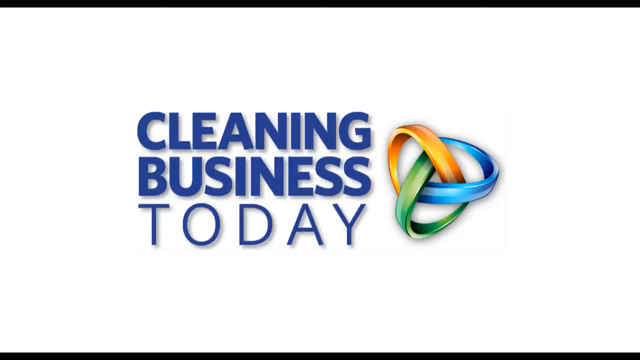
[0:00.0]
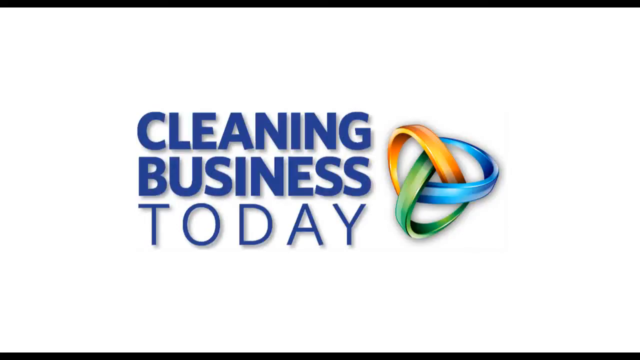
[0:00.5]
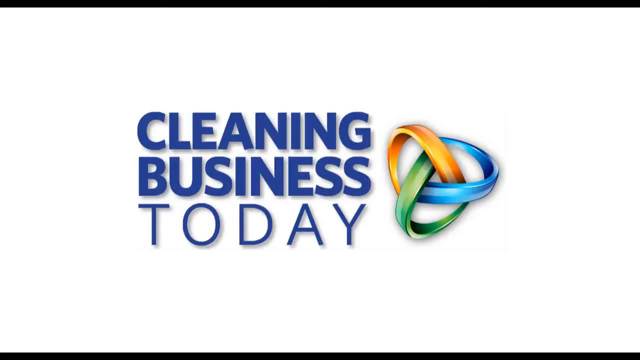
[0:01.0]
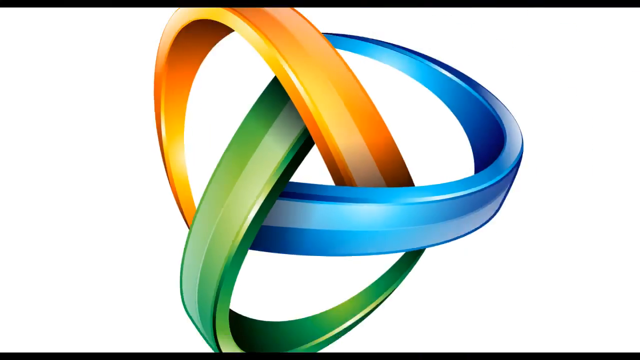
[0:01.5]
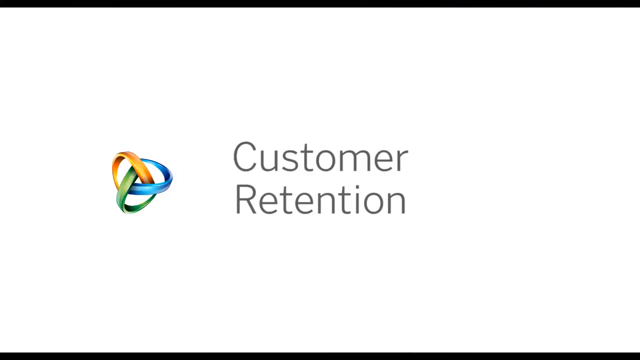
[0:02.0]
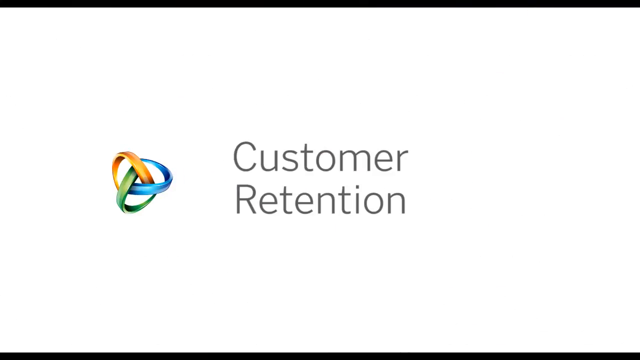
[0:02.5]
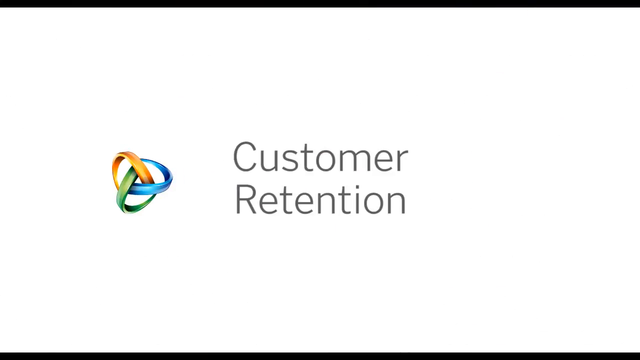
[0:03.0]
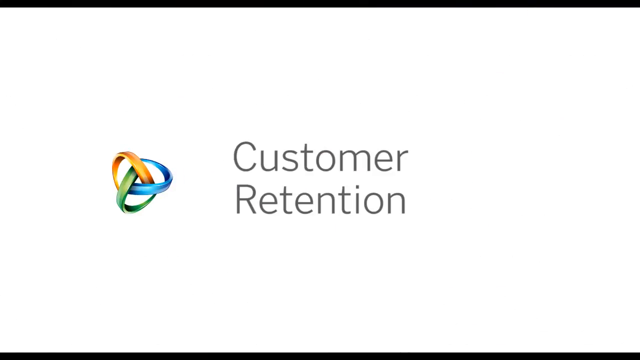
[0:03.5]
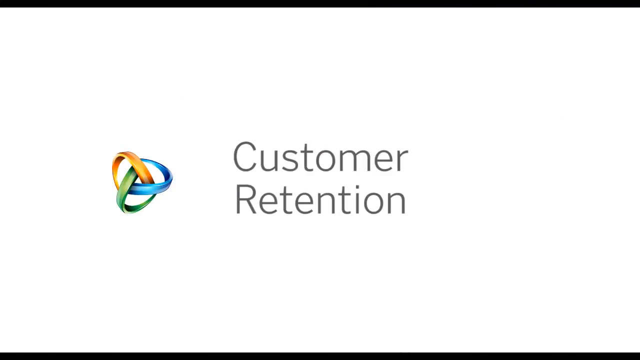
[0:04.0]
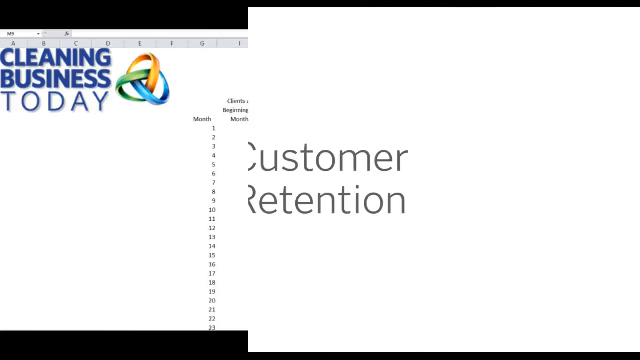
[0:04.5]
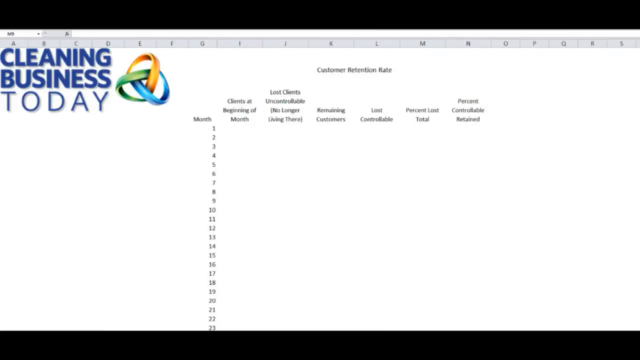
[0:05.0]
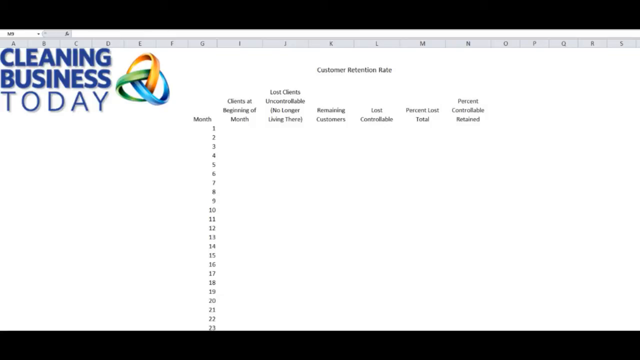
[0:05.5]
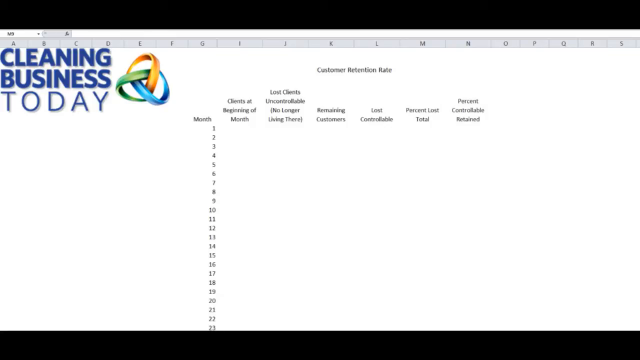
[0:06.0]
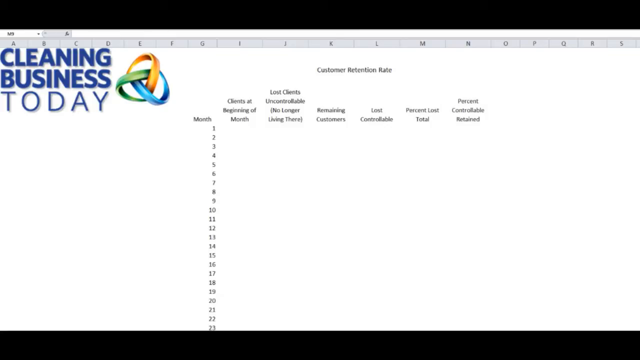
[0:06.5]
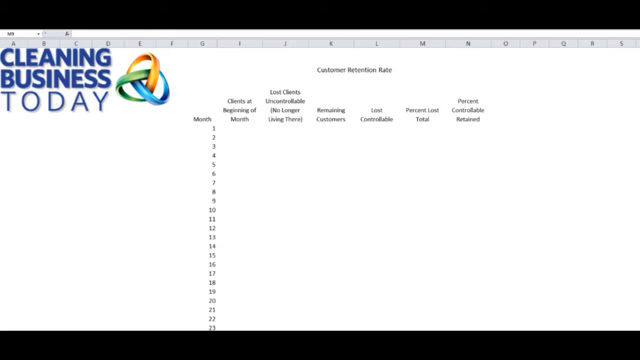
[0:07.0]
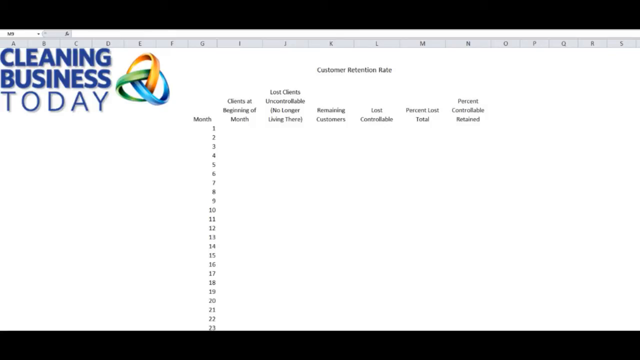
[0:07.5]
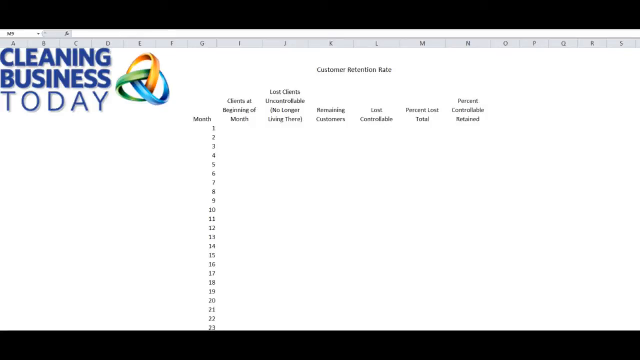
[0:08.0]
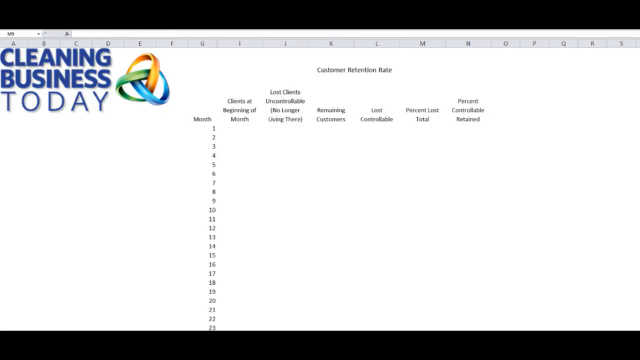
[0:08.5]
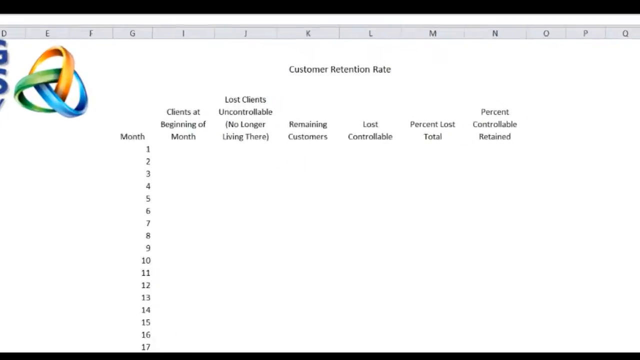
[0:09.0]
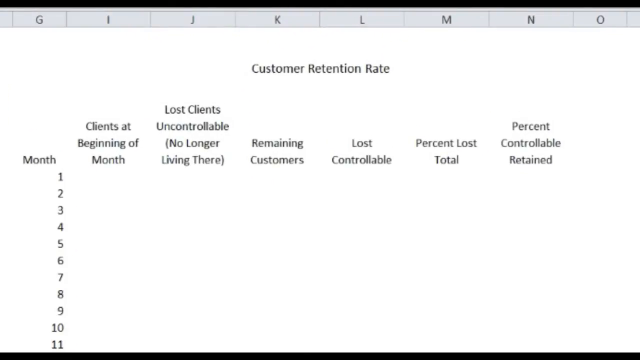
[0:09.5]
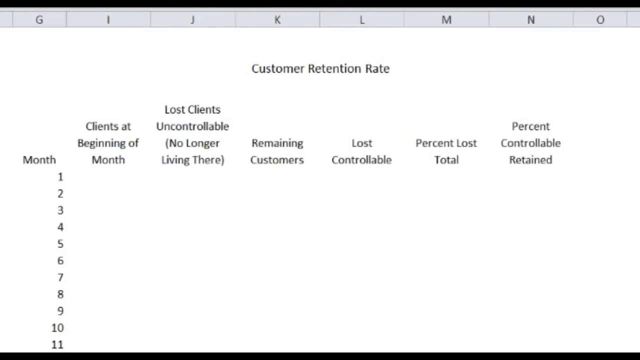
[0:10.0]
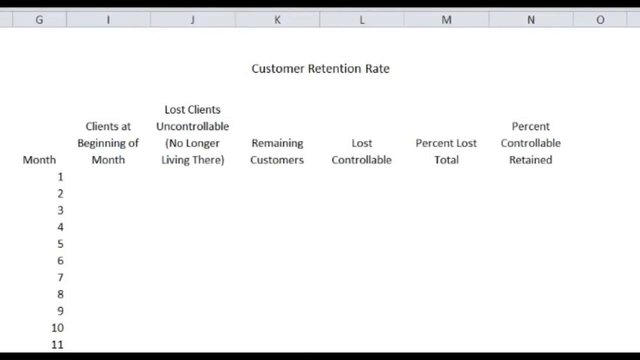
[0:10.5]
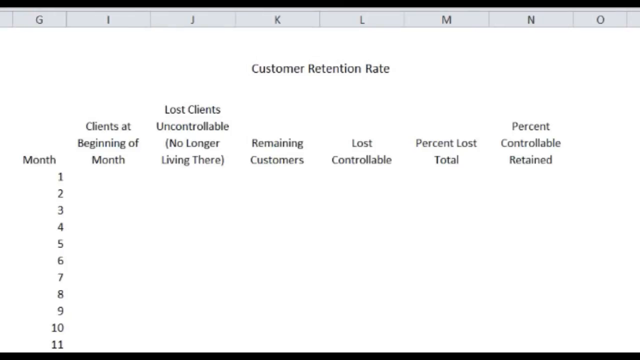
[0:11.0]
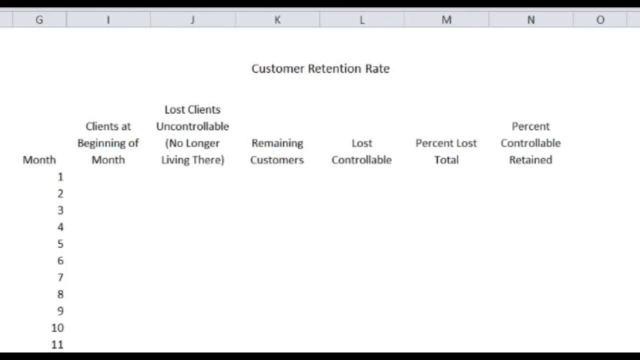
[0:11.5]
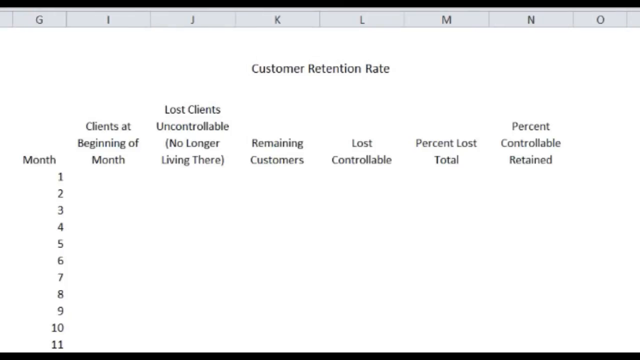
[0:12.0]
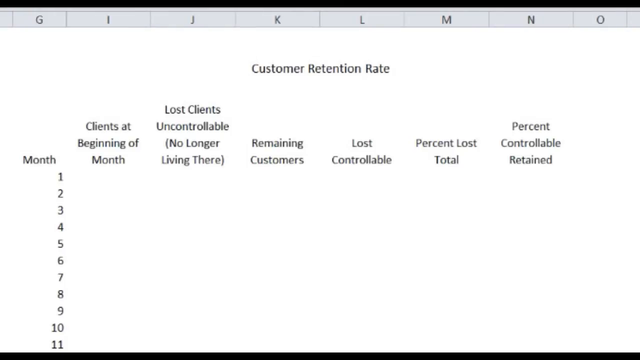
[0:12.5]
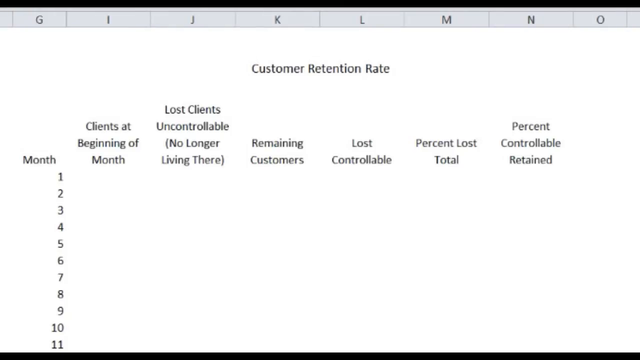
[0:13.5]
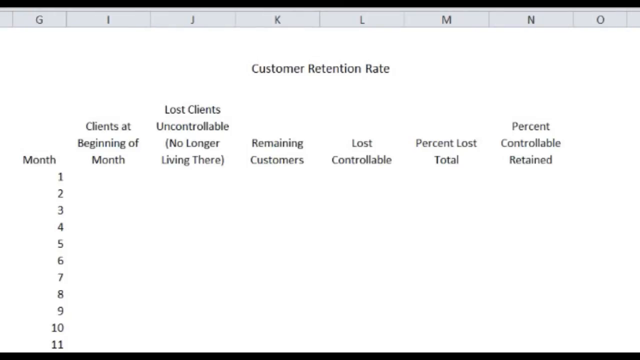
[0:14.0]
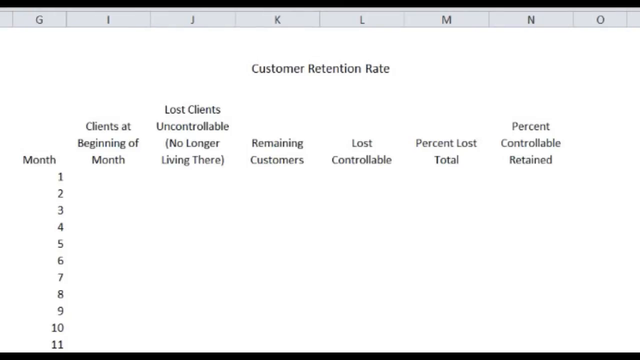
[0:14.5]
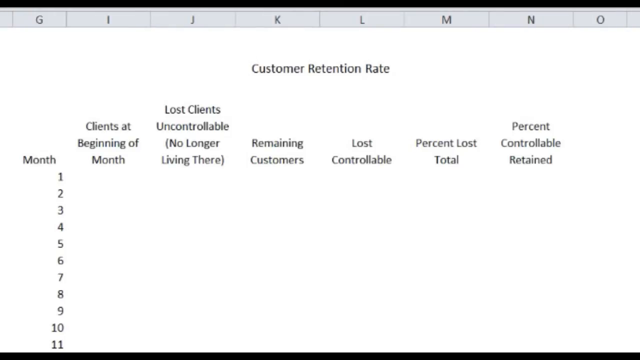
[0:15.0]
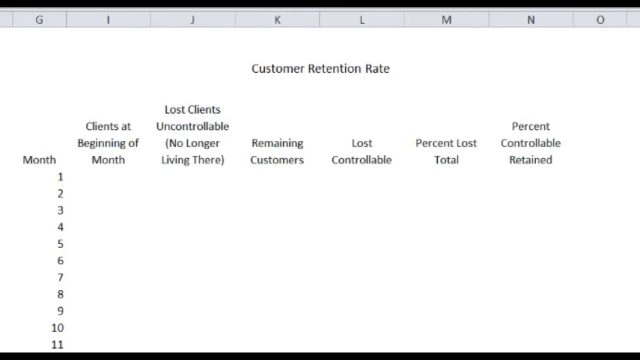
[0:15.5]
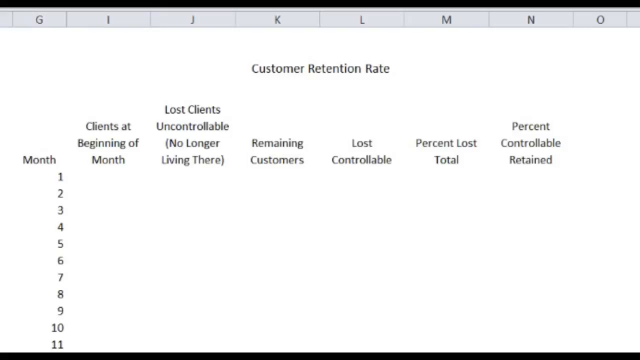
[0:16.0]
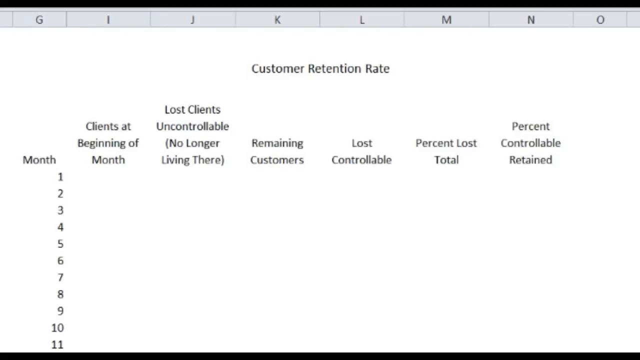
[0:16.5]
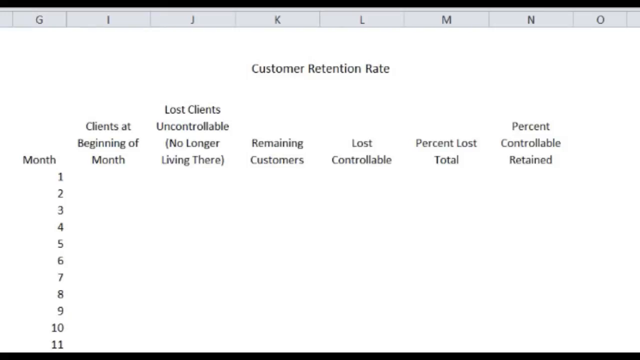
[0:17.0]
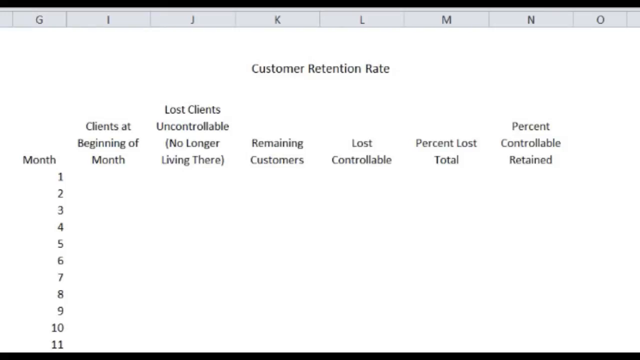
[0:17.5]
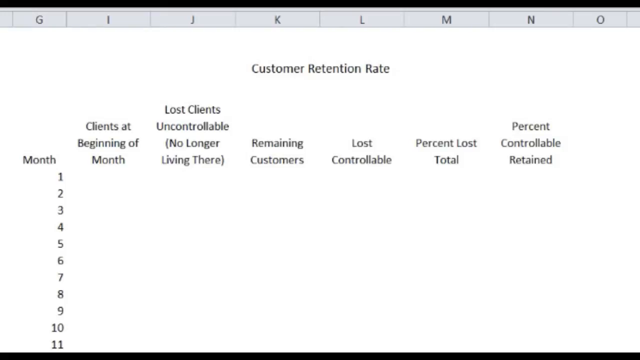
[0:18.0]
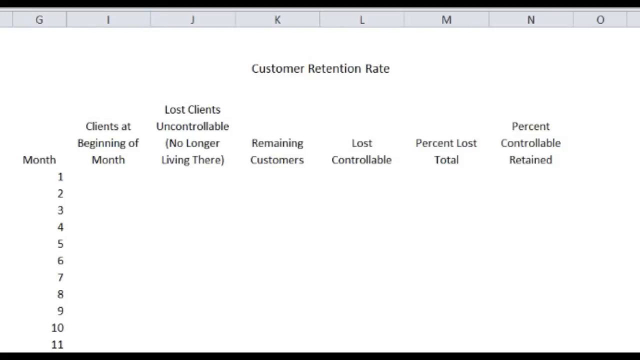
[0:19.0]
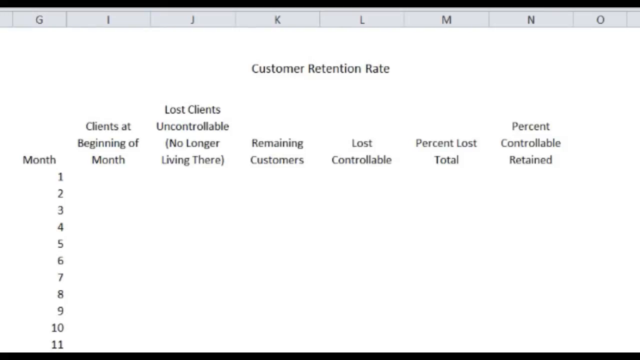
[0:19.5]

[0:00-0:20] This looks like an instructional video by the company Cleaning Business Today. The first slide shows "Cleaning Business Today" in a bold dark blue font with a logo to the right of it. The next slide shows the logo again, with "Customer retention" in the middle of the page. The following slide shows "Cleaning Business Today" with the logo at the top left and what looks like an Excel spreadsheet. The first column is headed "Month" and lists the month numbers. The view then zooms in to the headings of the spreadsheet. At the top it says "Customer retention rate". Next to "Month" is "Clients at the beginning of the month", followed by "Lost clients uncontrollable, no longer living there", "Remaining customers", "Lost controllable", "Percent lost total", and finally "Percent controllable retained".